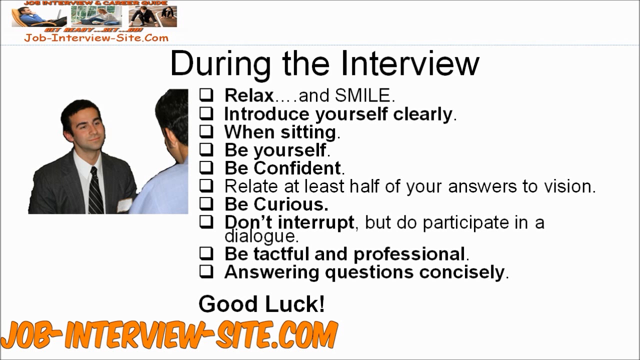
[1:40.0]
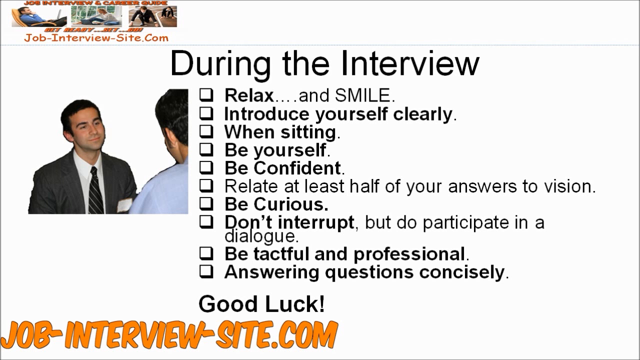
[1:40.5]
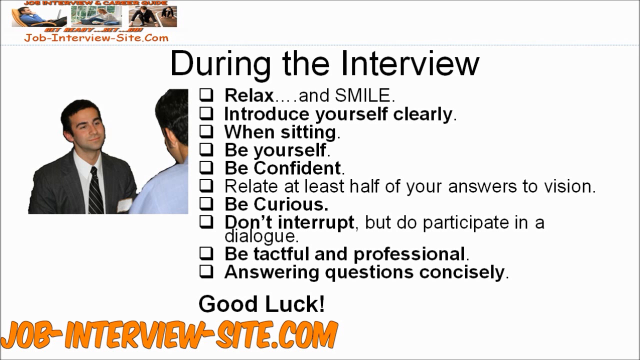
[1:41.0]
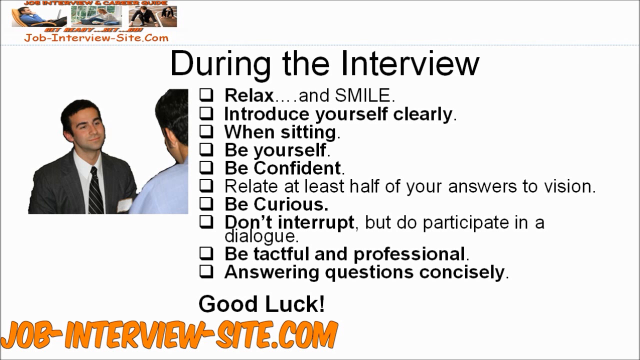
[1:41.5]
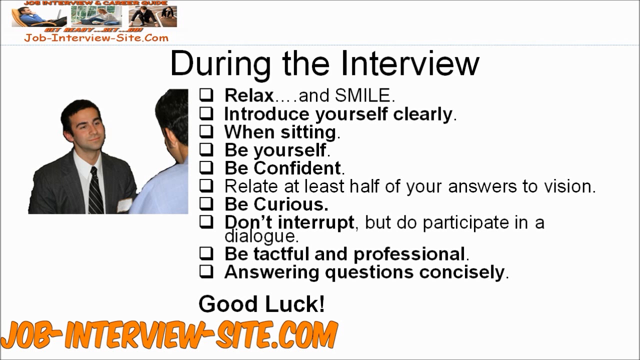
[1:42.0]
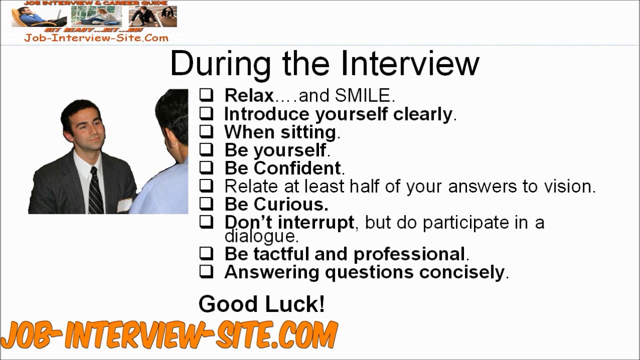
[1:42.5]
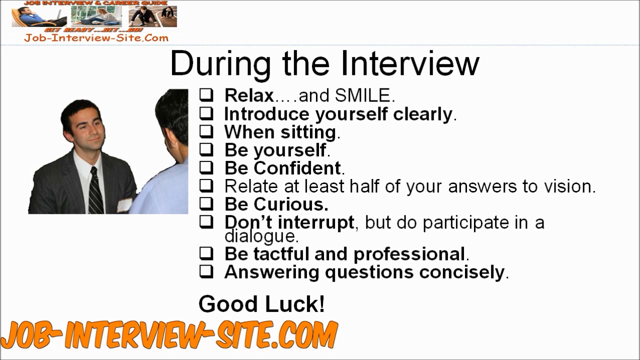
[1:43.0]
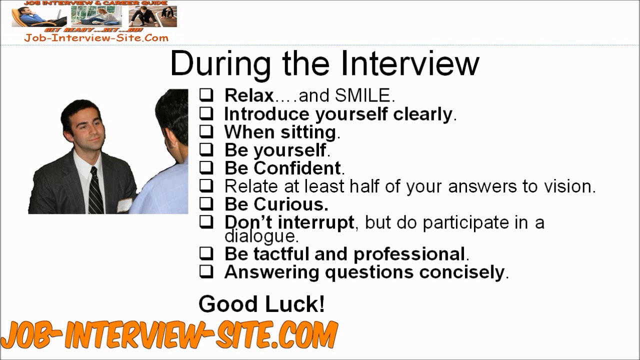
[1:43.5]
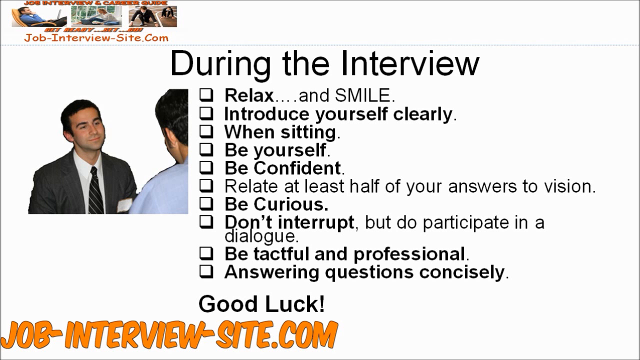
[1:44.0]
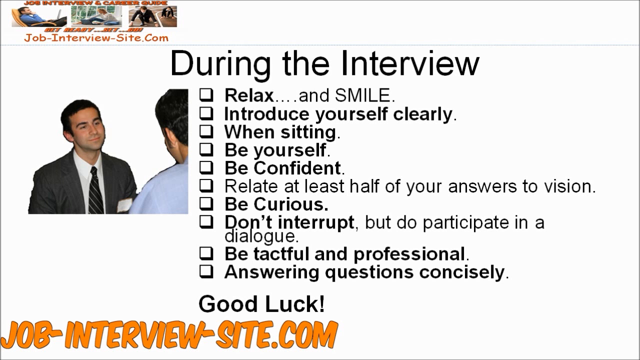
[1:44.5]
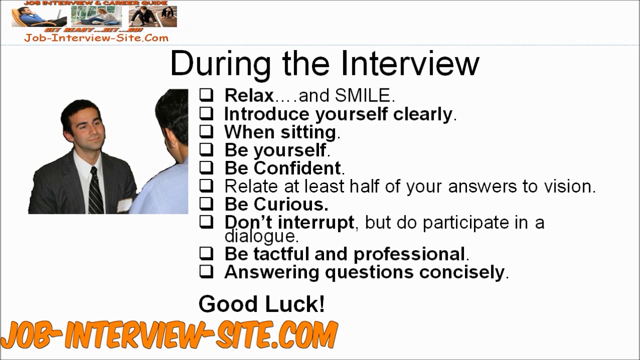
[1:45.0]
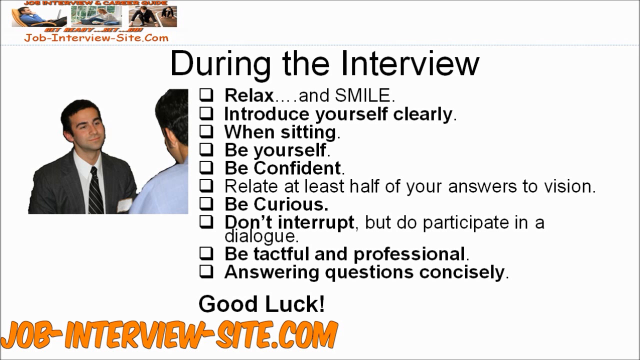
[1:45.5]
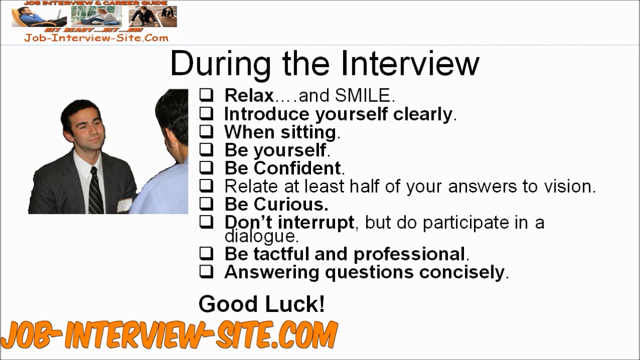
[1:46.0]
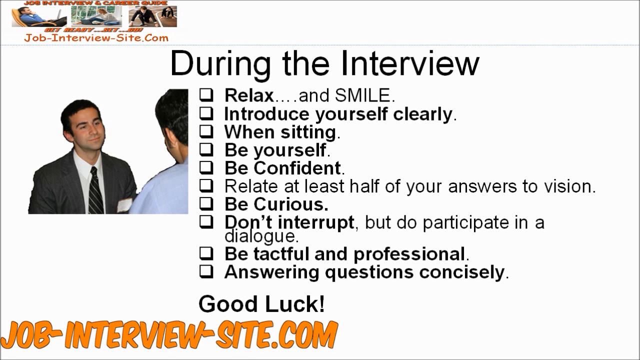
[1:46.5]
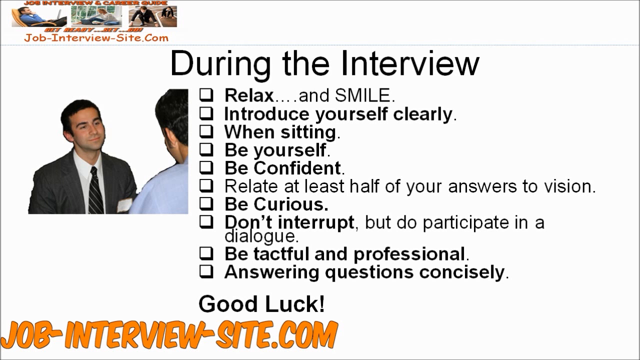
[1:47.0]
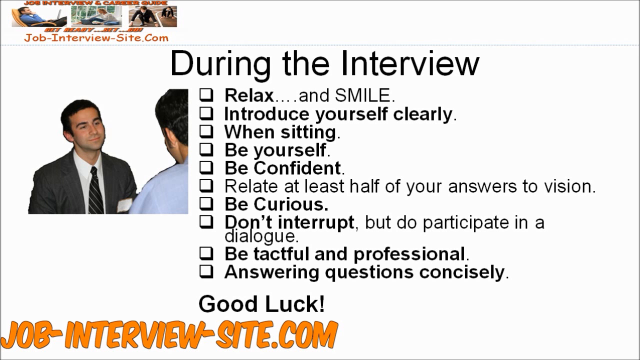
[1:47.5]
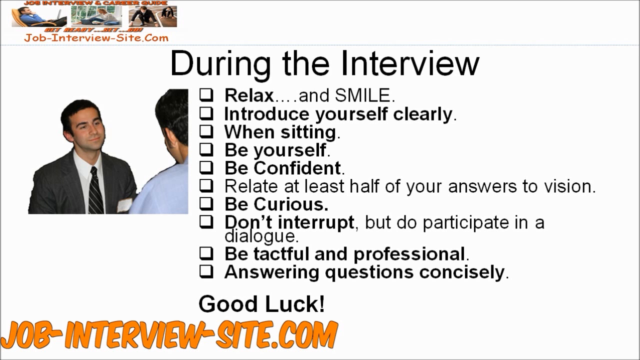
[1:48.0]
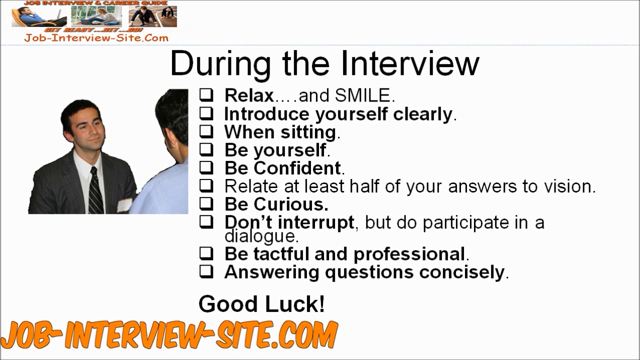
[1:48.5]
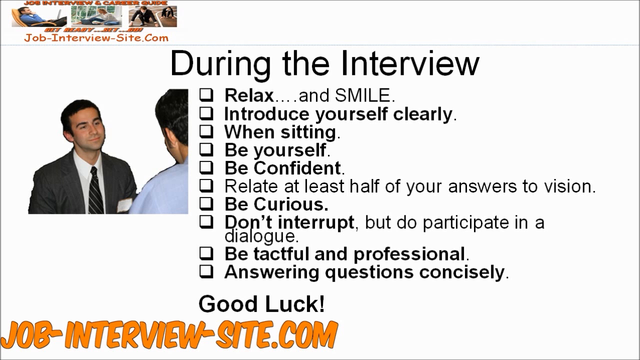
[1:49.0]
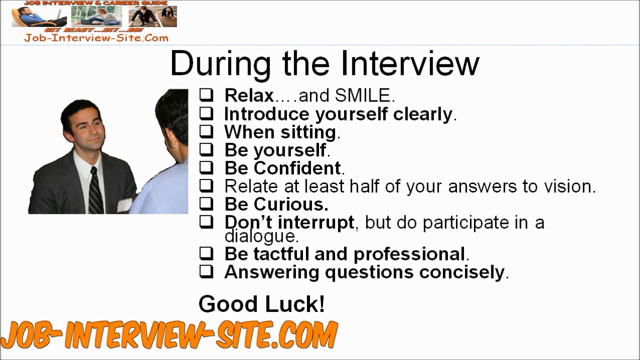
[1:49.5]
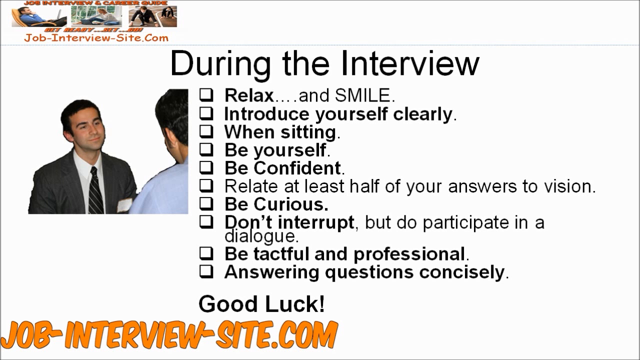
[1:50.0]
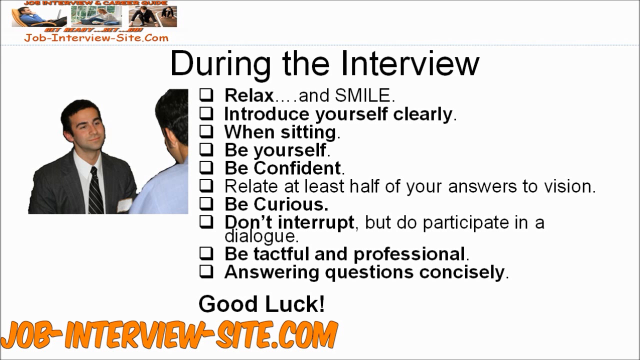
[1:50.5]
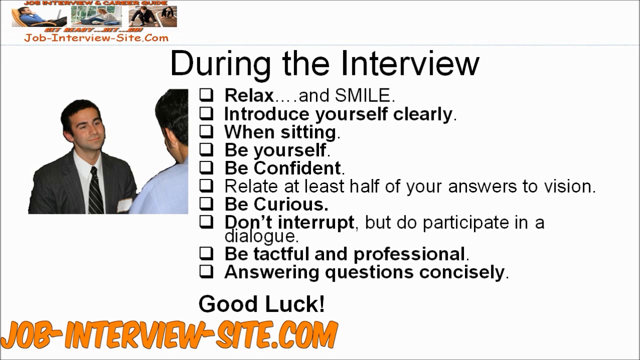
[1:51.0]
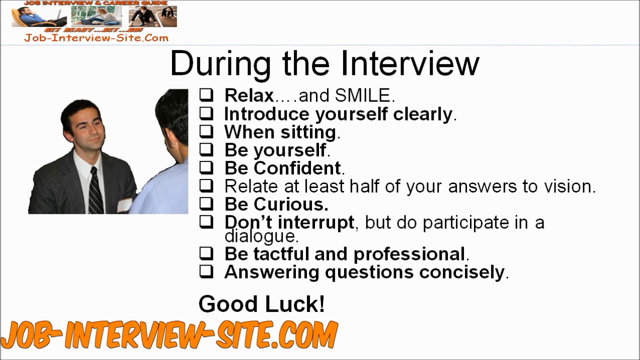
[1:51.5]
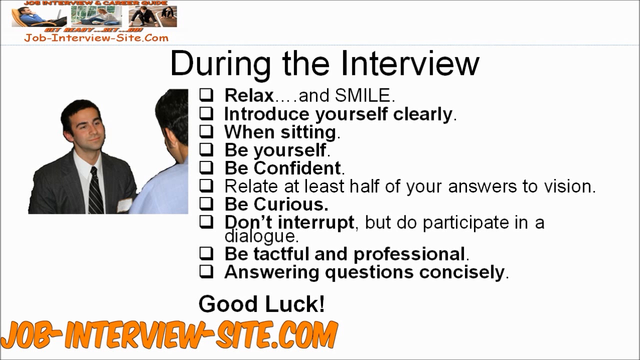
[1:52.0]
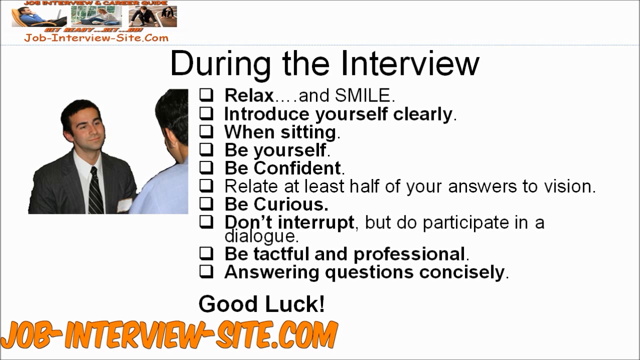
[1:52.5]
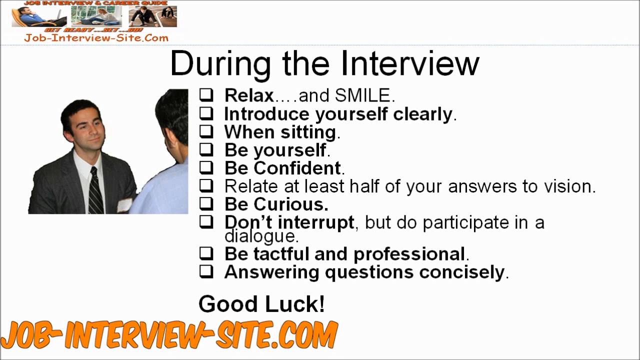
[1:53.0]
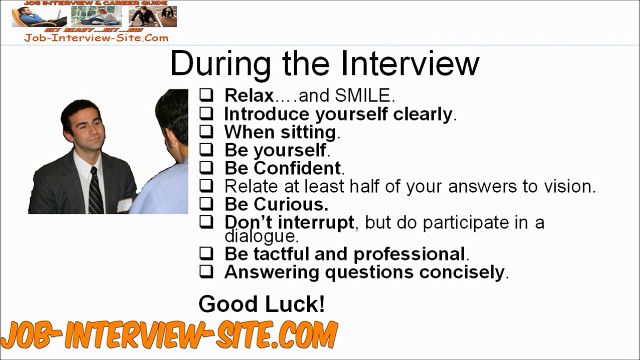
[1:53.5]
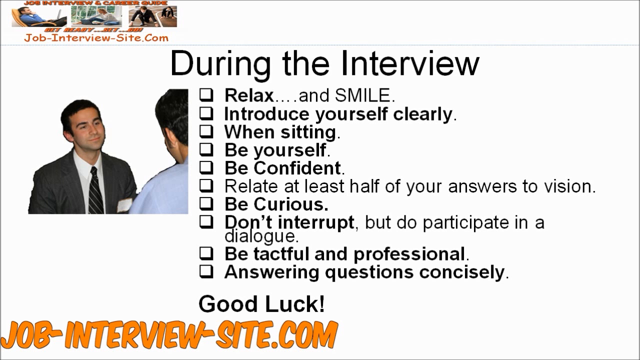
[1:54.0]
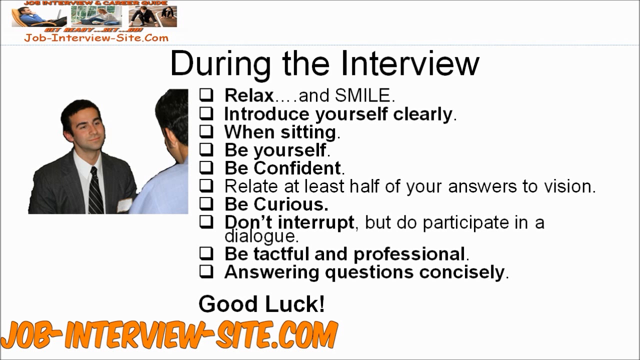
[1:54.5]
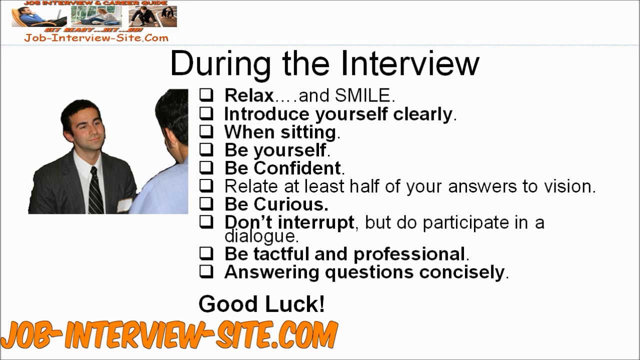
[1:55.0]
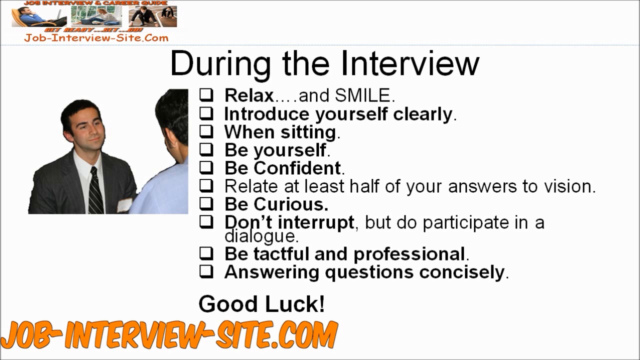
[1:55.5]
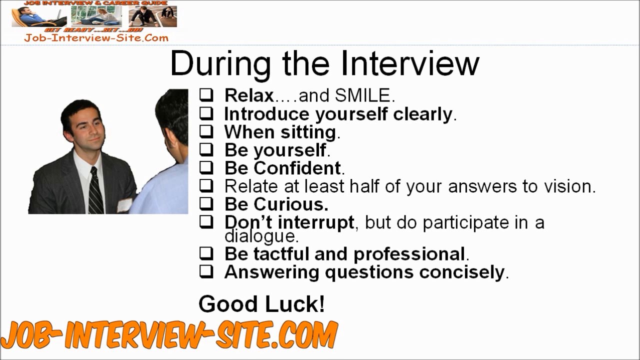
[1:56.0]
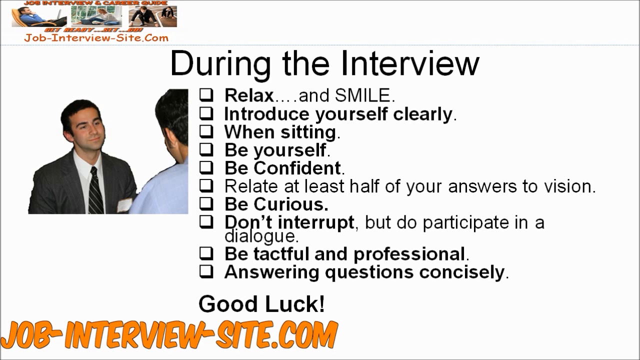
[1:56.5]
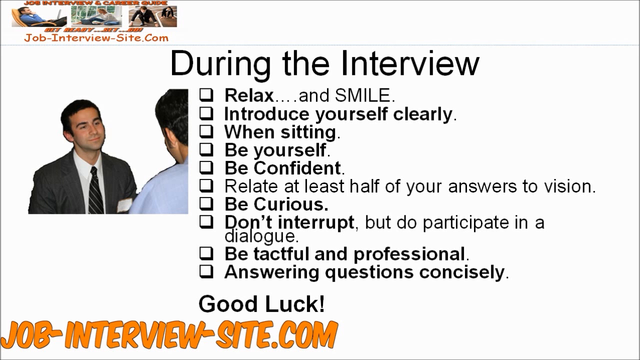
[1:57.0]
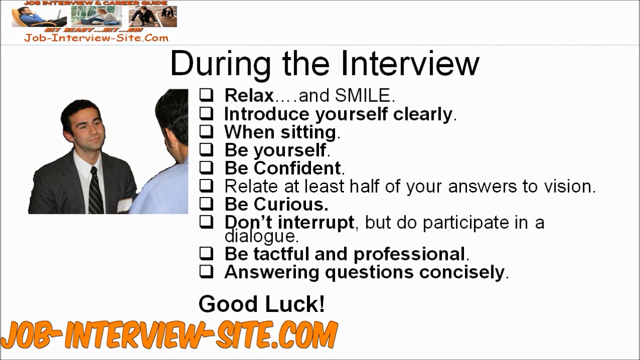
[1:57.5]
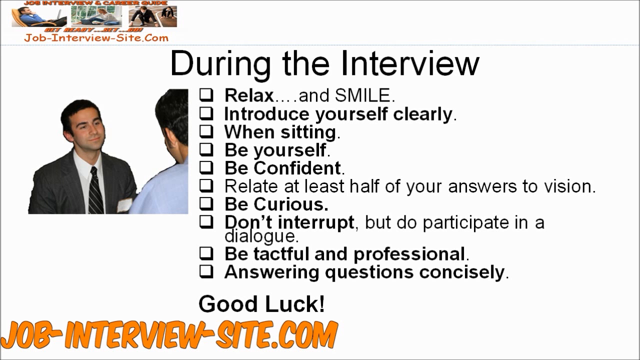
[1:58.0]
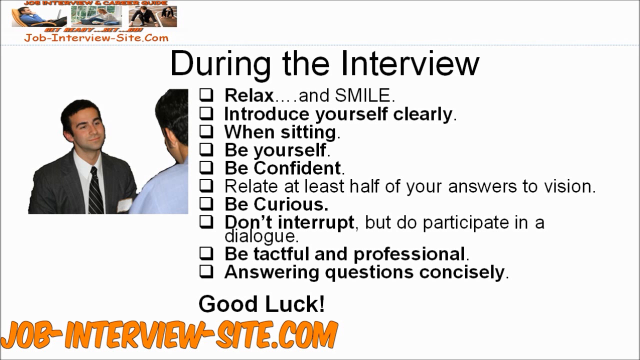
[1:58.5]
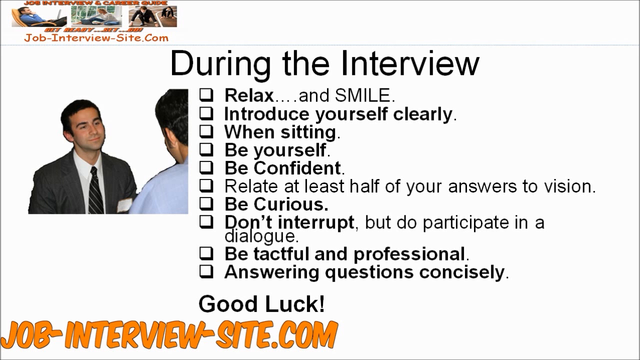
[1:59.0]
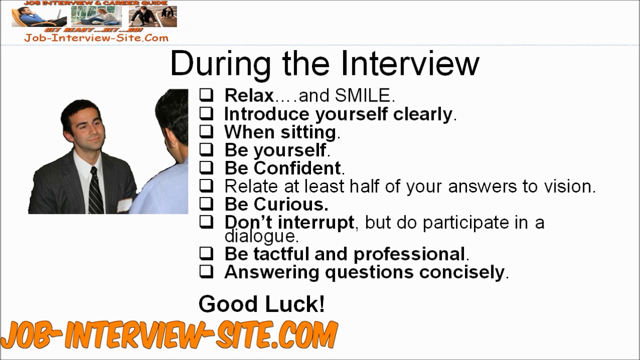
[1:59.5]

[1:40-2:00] The "during the interview" page remains on screen. The bullet points are small squares with a shadow to the right and underneath, giving them sort of a 3D effect. Most of the bullet text is in a bold font; the exceptions are the sixth bullet point, which begins "relate at least half of your," and the second part of the eighth bullet point, "but do participate in a dialogue." The background is completely white behind all the text and images, except for a very faint gray horizontal line running all the way across the top of the screen, beneath the website address and above "during the interview." The man in the picture on the left is being interviewed by another person, seen only from the back of the head, with half of the head cut off; this person has dark hair, an ear visible, and wears a light blue shirt.